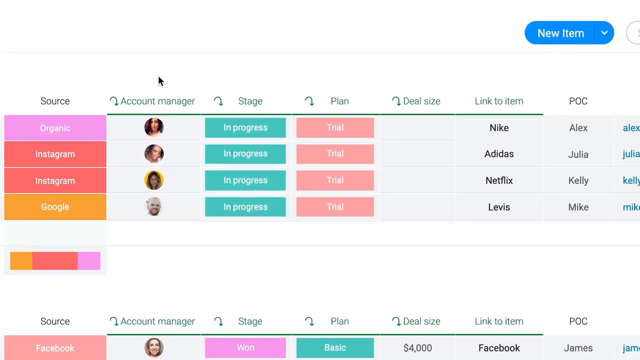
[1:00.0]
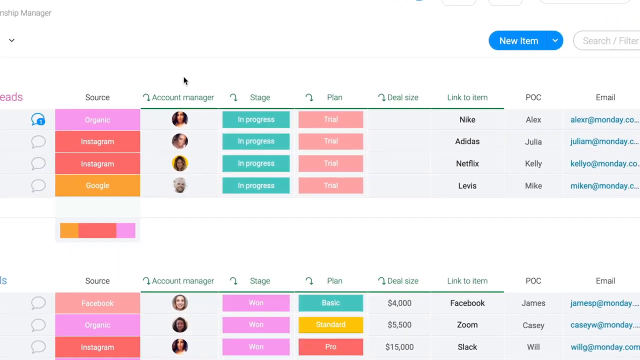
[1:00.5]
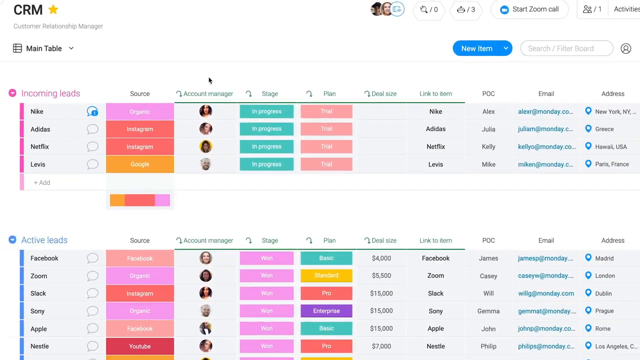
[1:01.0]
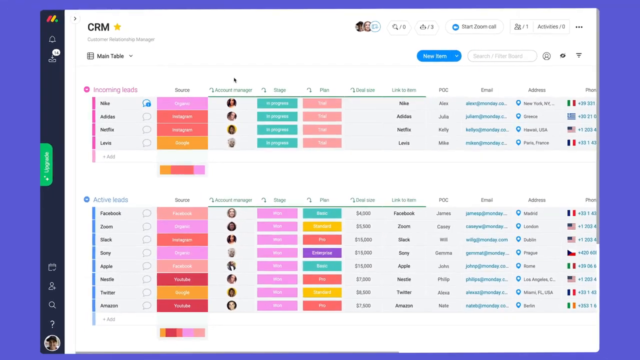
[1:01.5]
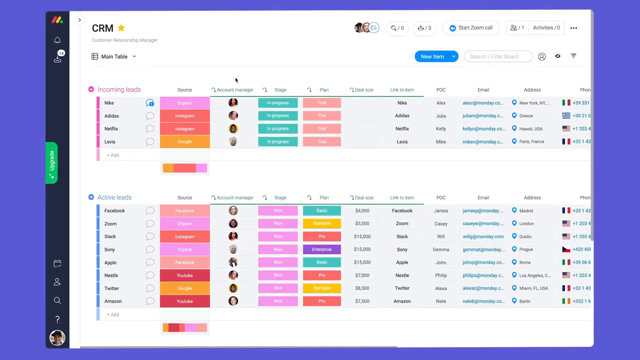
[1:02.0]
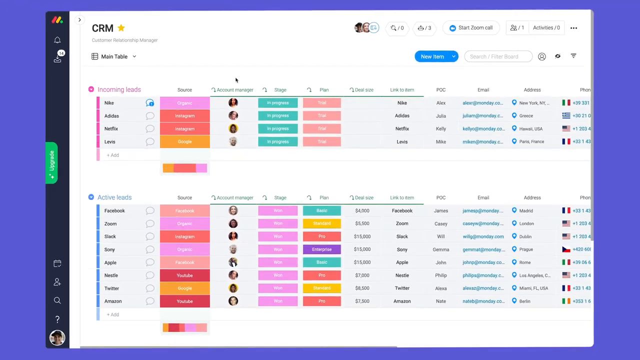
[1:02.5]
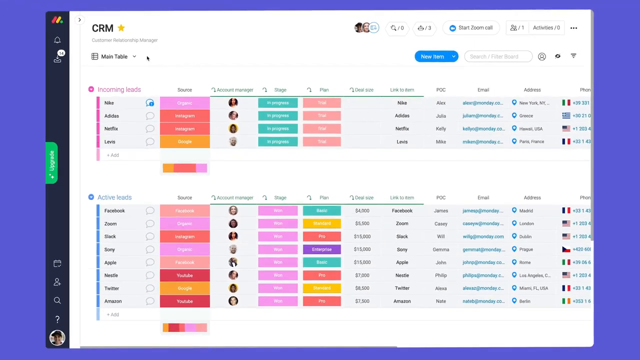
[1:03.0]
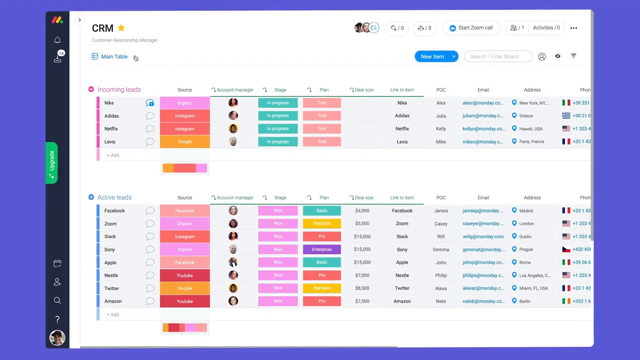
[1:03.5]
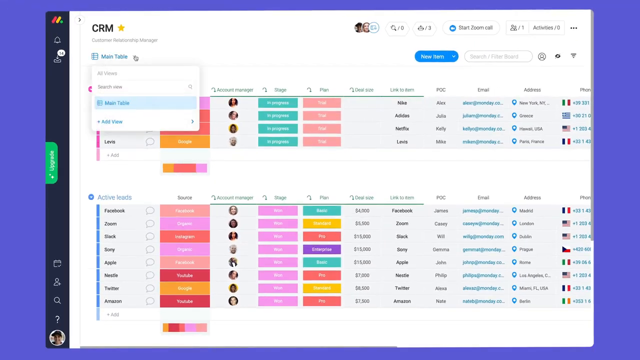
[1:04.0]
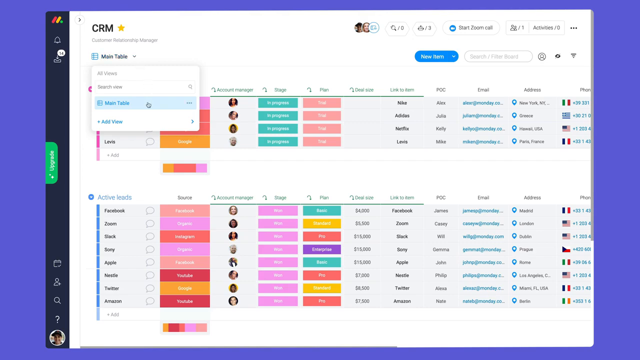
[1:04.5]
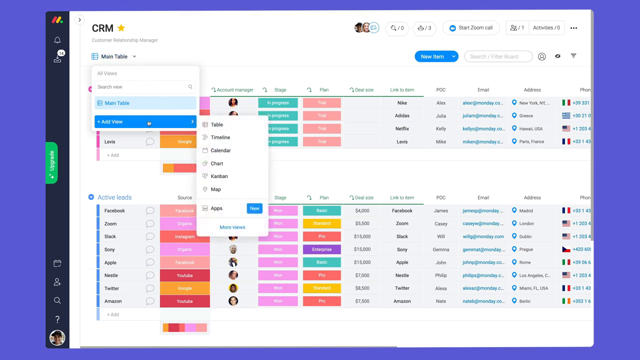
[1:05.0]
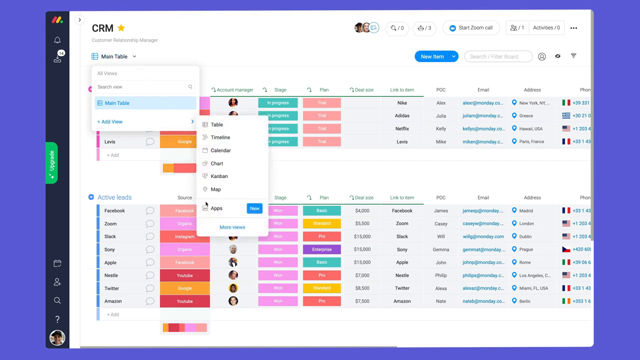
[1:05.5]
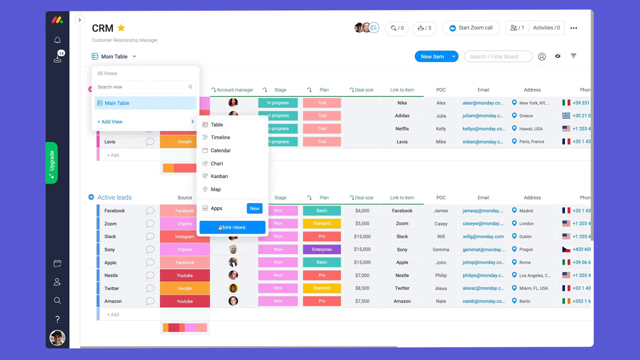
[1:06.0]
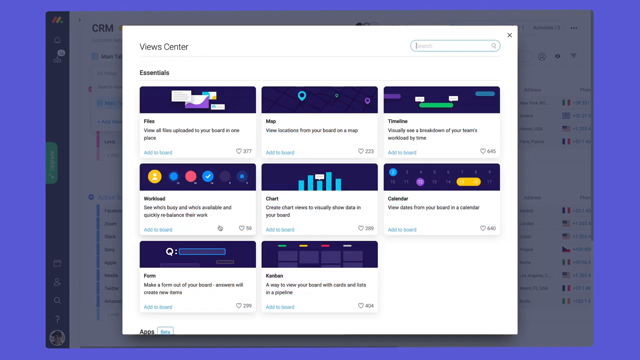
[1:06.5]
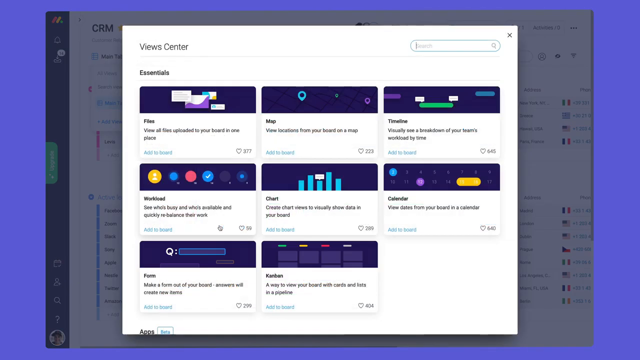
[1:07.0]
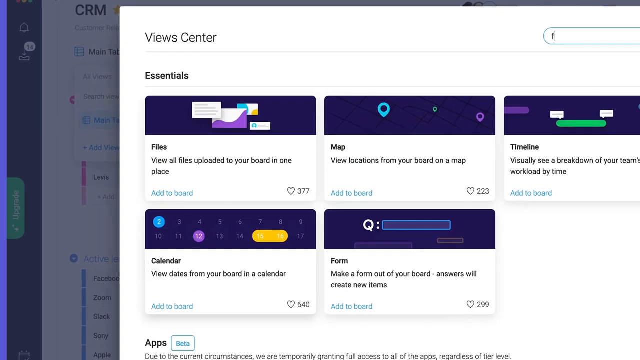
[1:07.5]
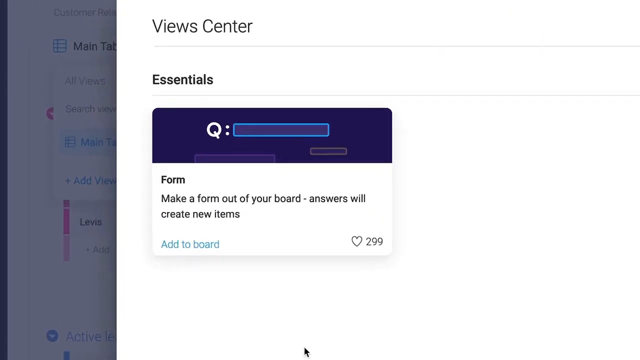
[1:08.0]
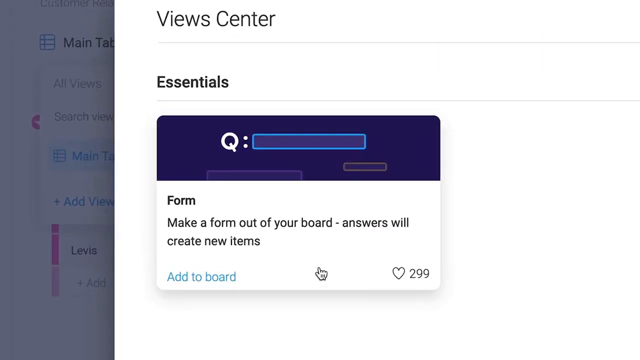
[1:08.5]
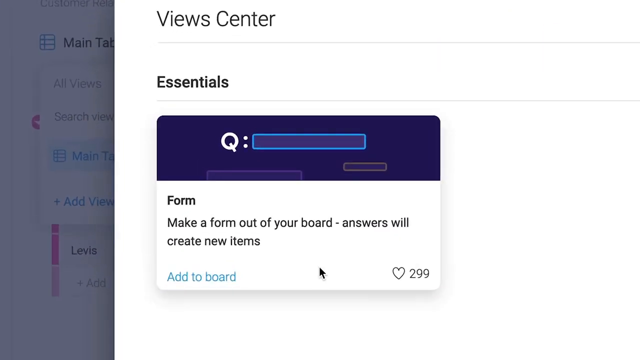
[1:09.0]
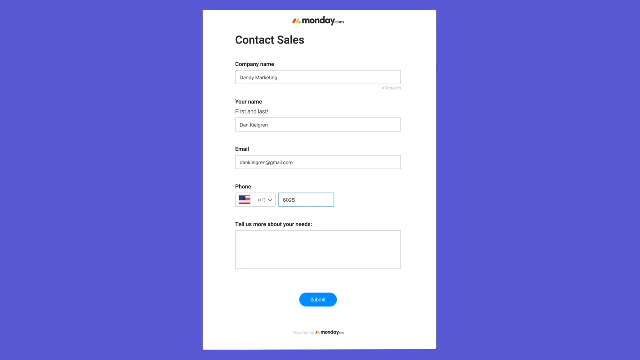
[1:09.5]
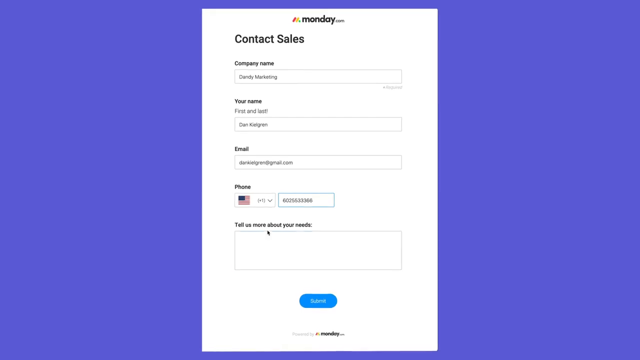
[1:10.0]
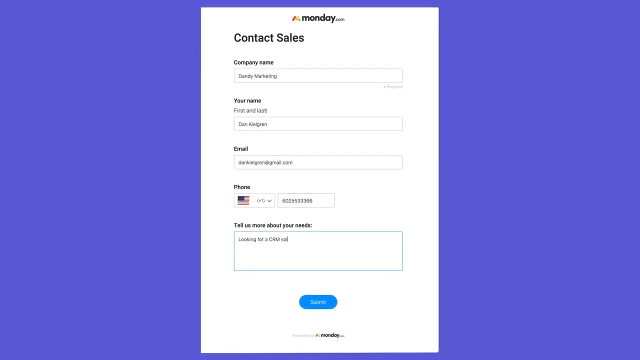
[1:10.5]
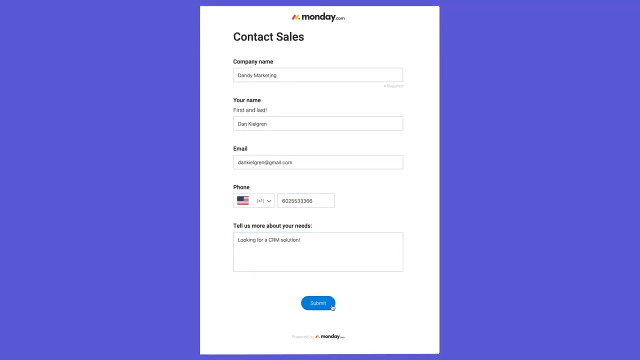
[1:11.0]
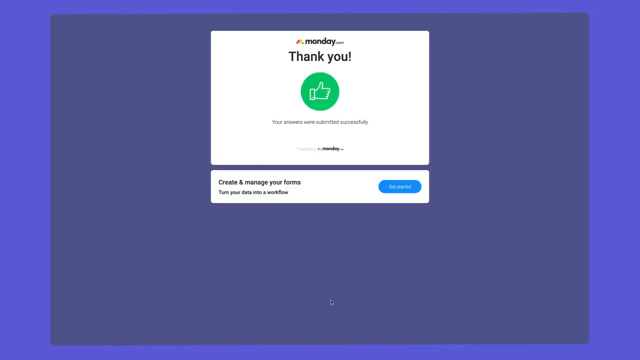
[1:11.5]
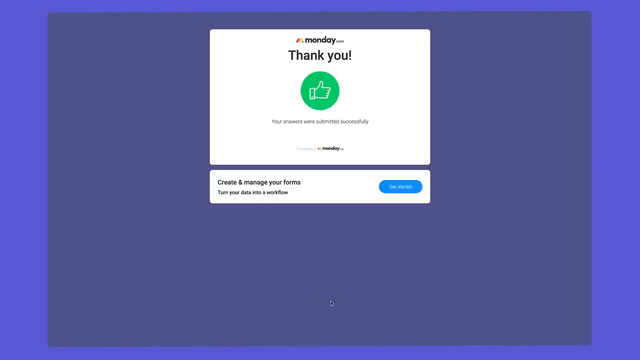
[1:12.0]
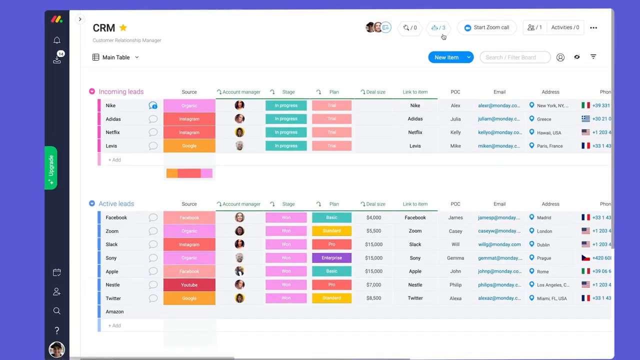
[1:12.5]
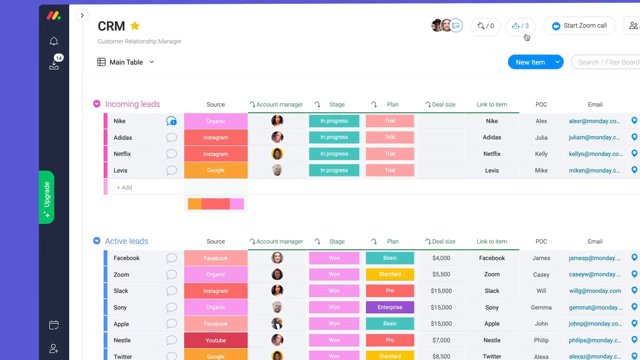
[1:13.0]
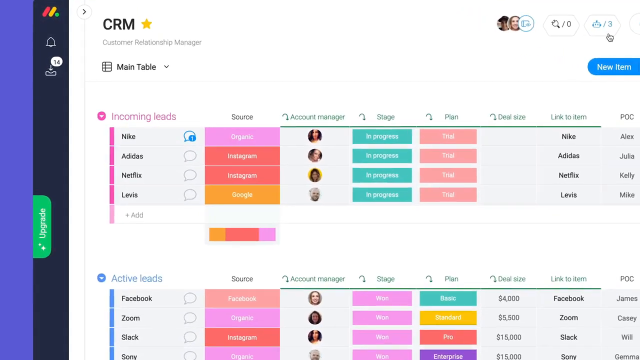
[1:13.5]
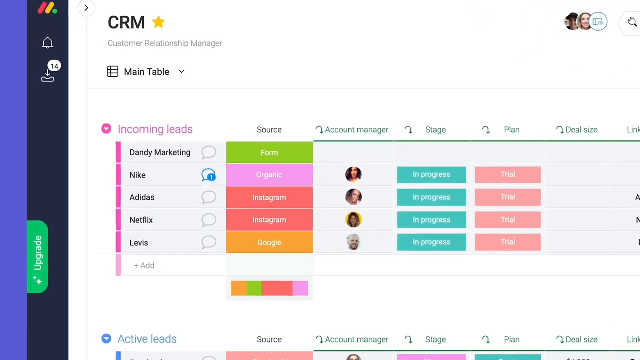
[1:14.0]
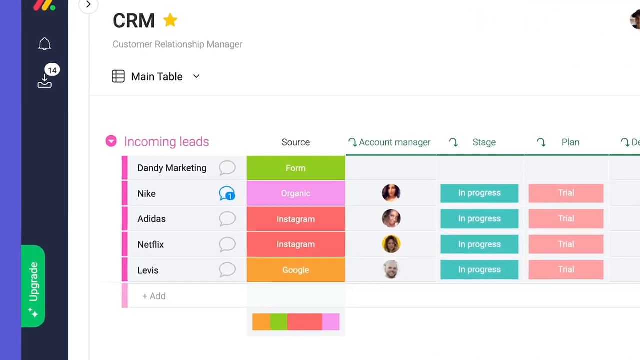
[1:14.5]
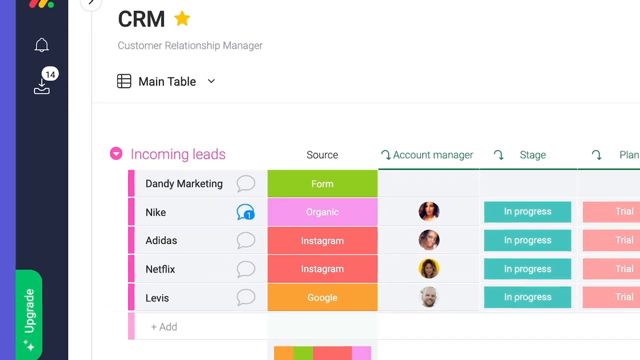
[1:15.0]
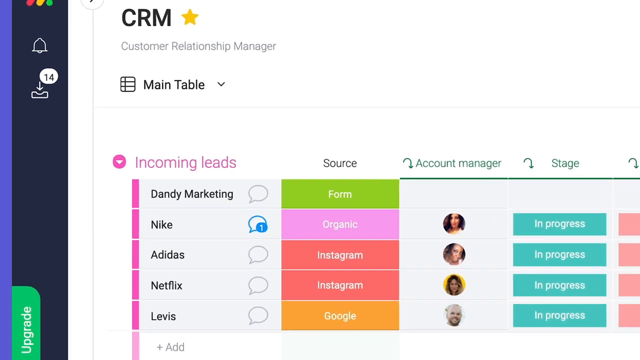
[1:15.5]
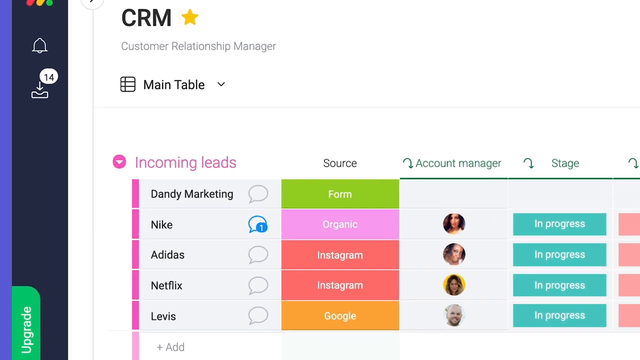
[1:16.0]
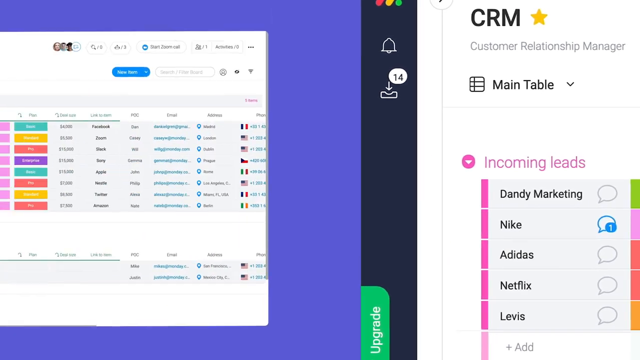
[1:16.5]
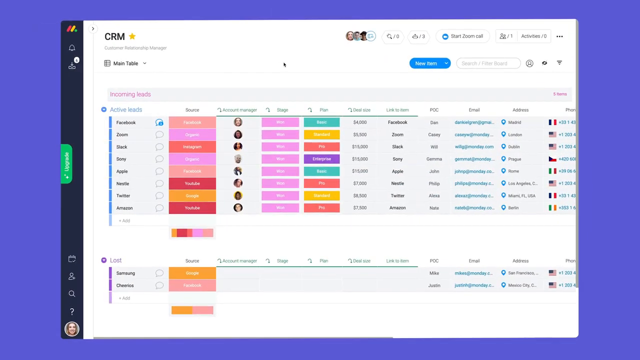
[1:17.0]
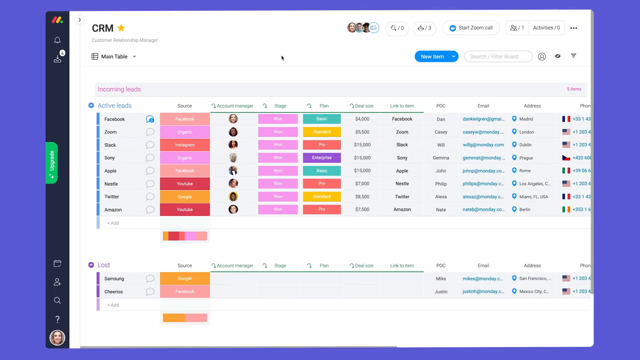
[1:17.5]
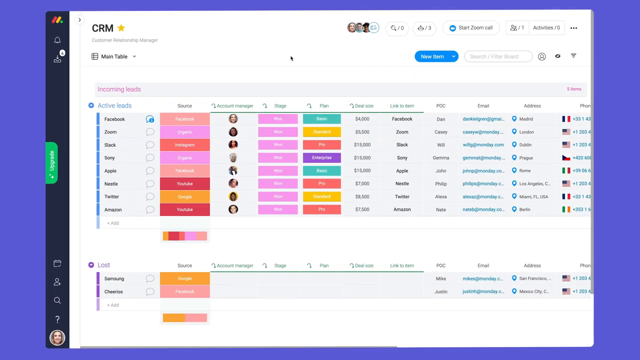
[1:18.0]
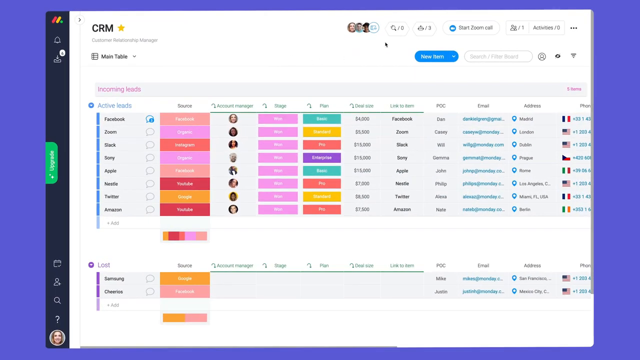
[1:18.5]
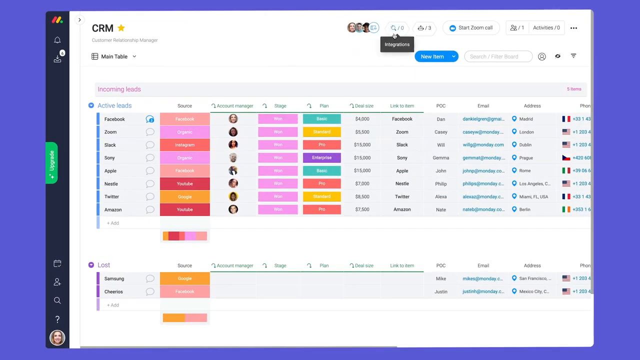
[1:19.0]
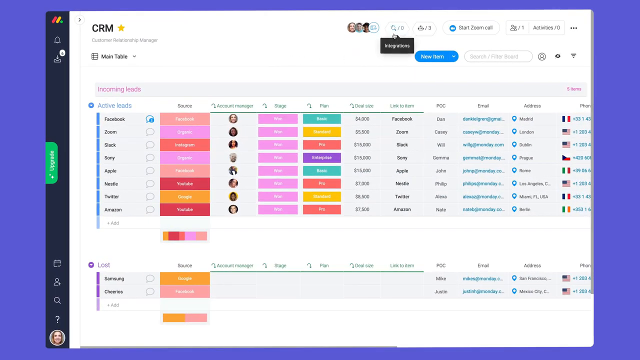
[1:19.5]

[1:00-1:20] The computer screen is still shown as the cursor clicks through. A page that says "CRM" opens, and a pop-up box is clicked that pulls up the view center, which has an essentials tab. The next screen is a piece of paper that says "Monday" at the top and then "contact sales," with lines to fill in underneath: company name, e-mail, phone number, a place for a name, and a place for more information. After they click out of the form, a pop-up box says "thank you." They return to the CRM page; the view zooms in and then moves to a different page where optional buttons are being clicked. Much of the computer screen is hard to read, but multiple columns and multiple views of different clickable items are visible in the view center.